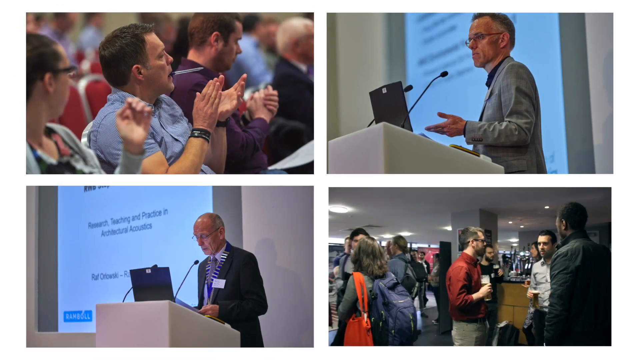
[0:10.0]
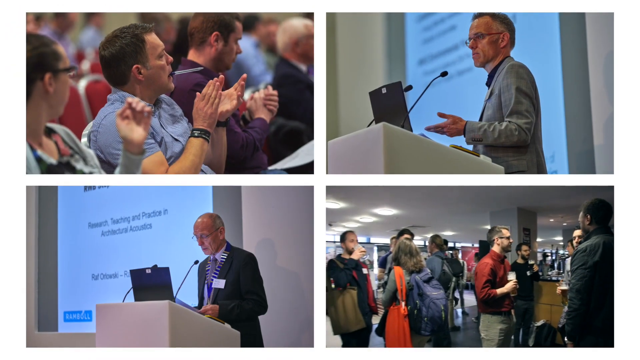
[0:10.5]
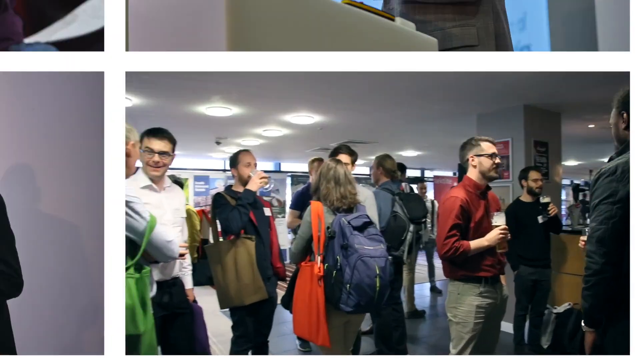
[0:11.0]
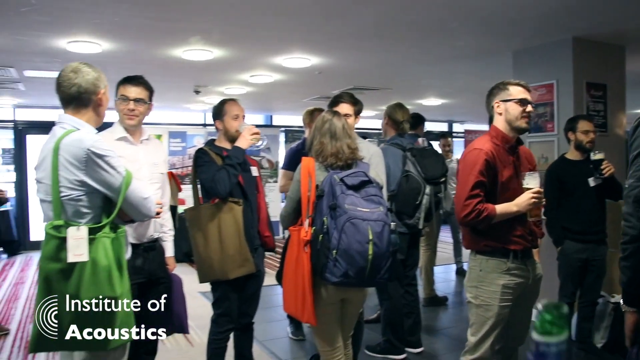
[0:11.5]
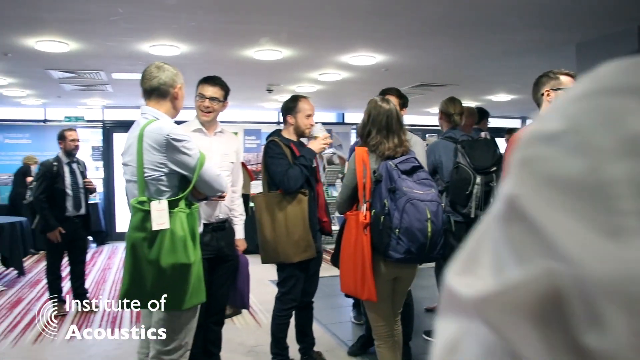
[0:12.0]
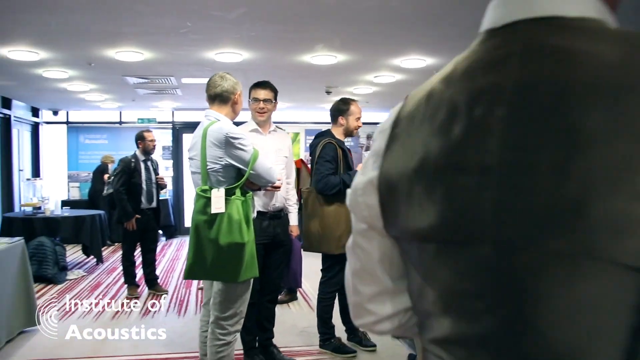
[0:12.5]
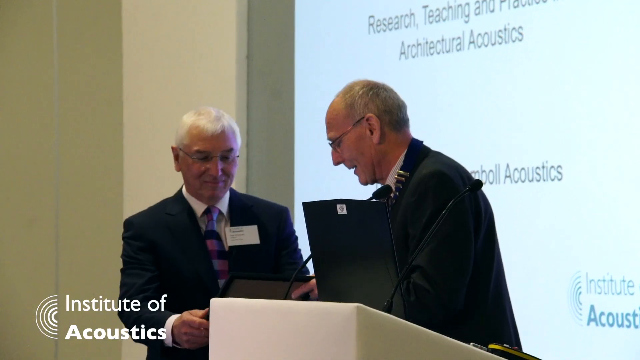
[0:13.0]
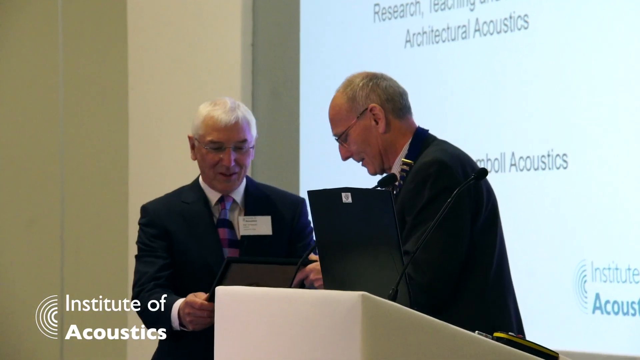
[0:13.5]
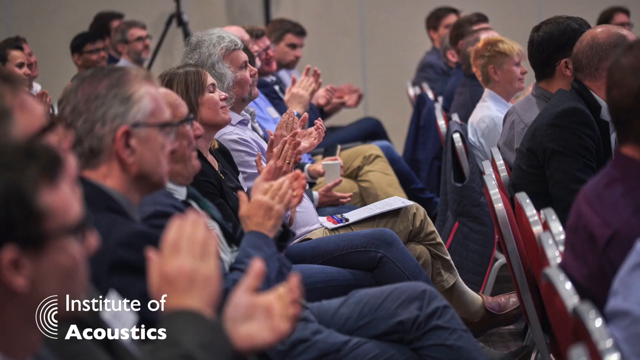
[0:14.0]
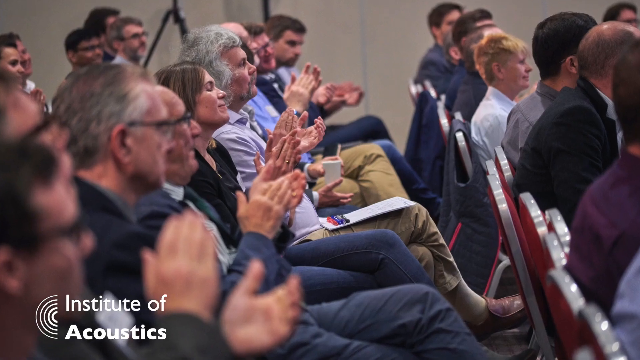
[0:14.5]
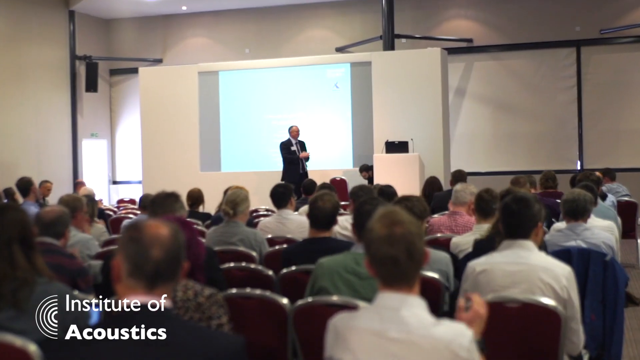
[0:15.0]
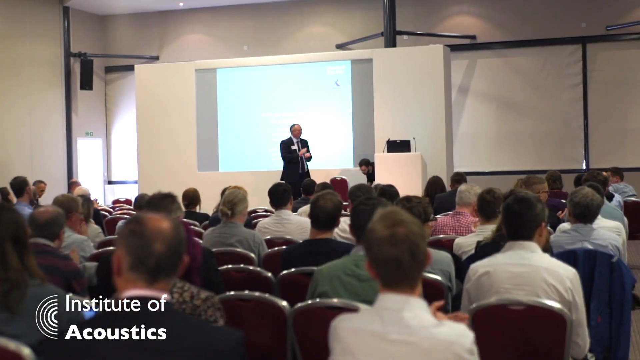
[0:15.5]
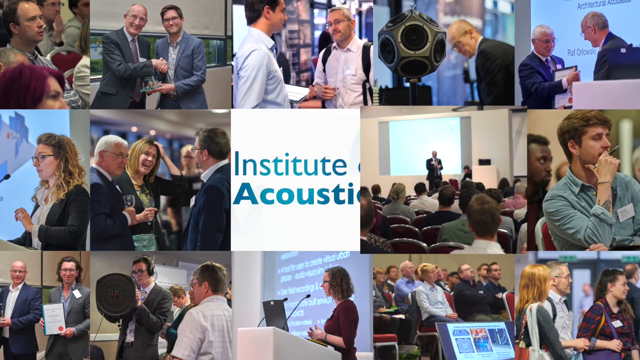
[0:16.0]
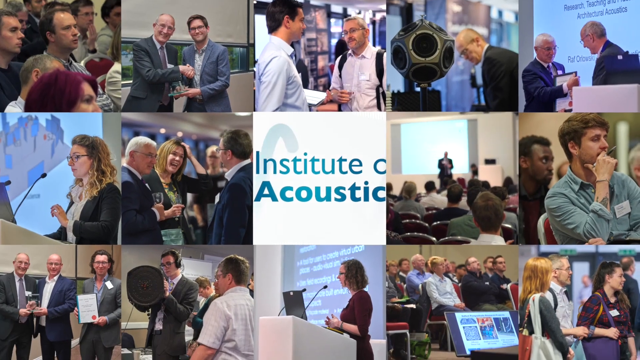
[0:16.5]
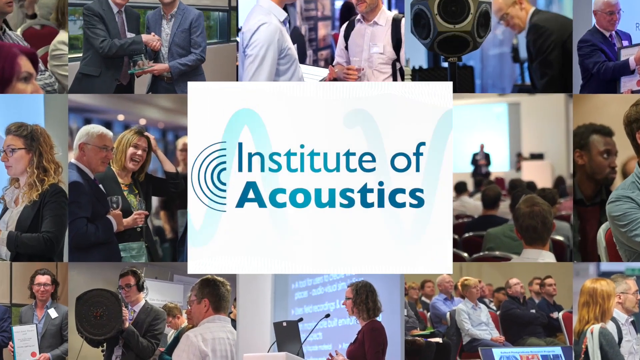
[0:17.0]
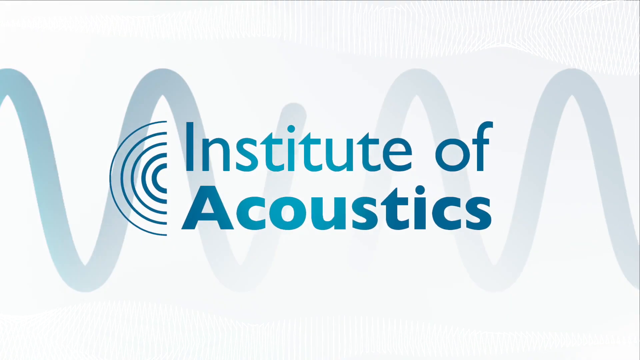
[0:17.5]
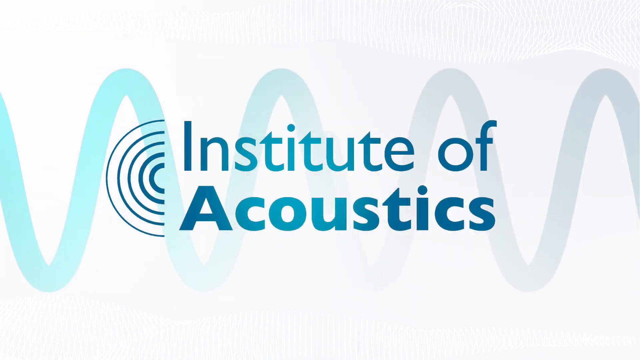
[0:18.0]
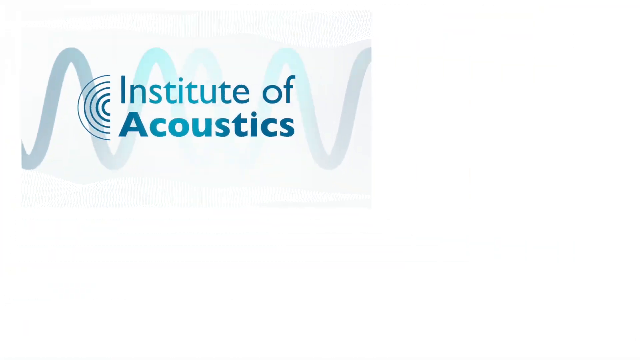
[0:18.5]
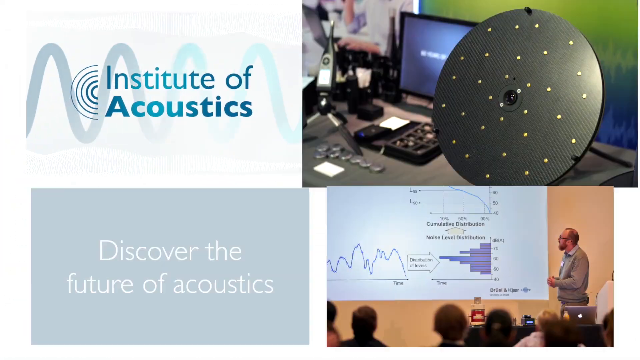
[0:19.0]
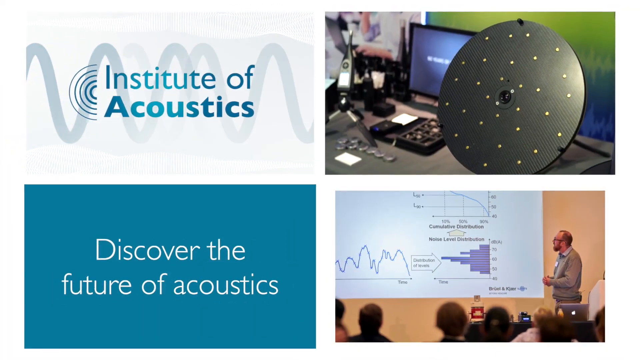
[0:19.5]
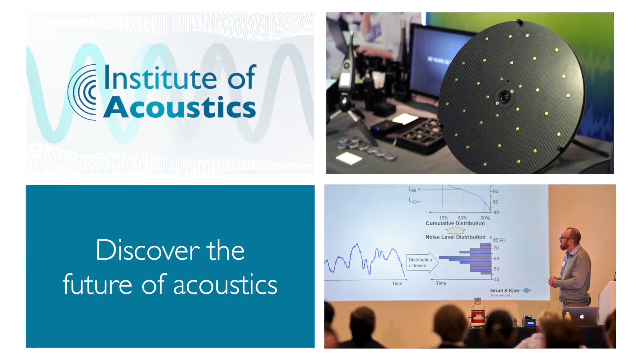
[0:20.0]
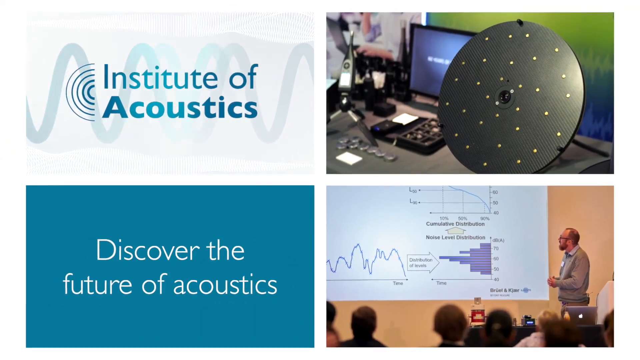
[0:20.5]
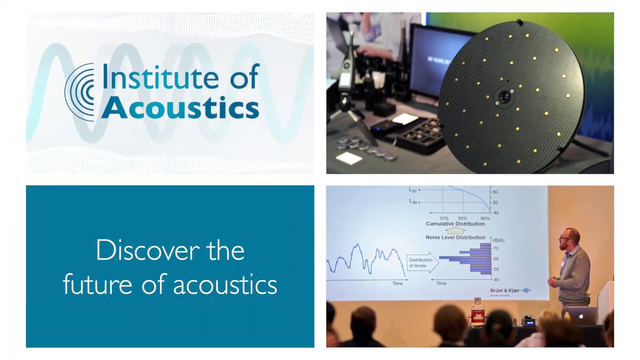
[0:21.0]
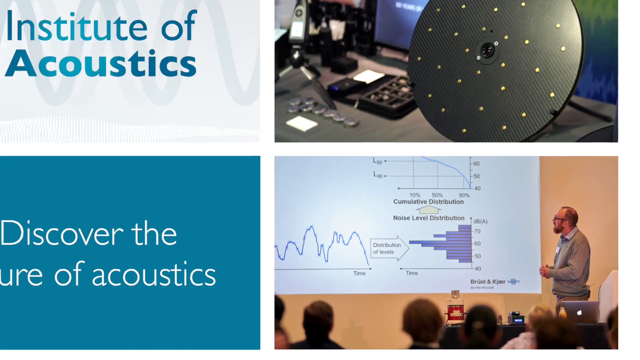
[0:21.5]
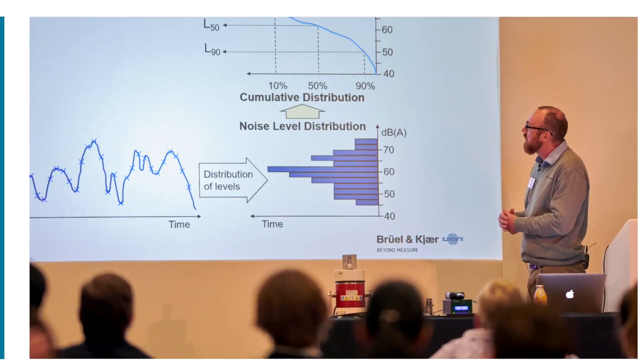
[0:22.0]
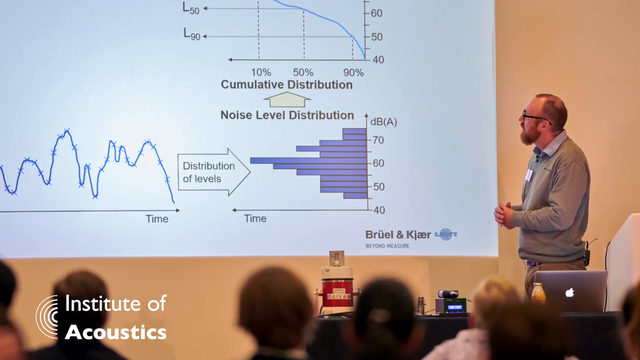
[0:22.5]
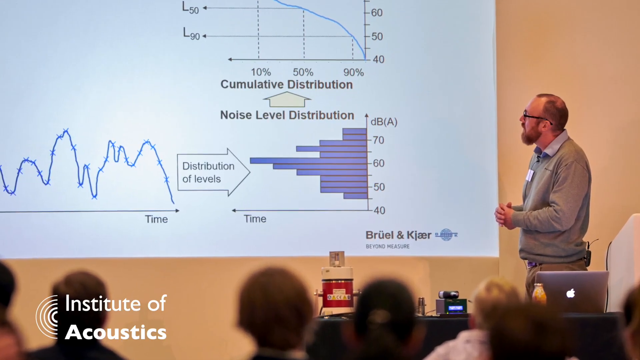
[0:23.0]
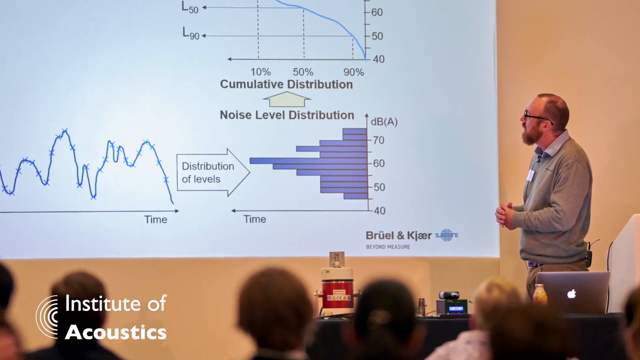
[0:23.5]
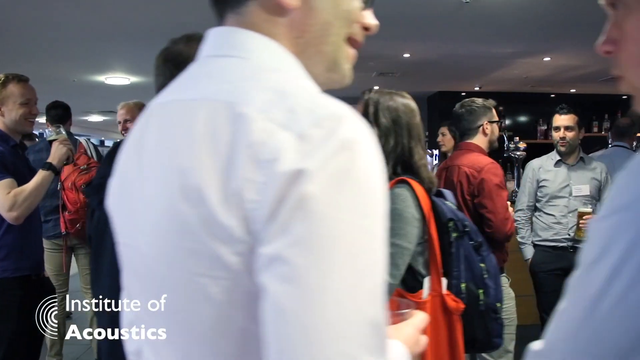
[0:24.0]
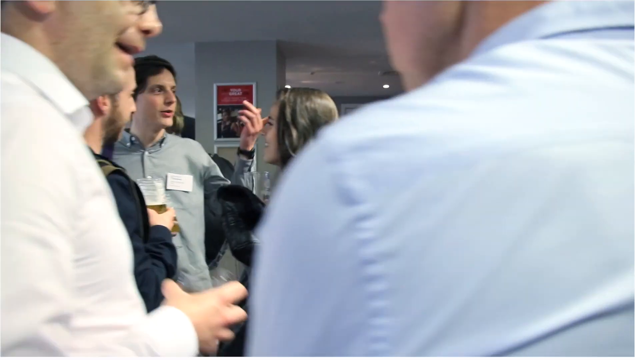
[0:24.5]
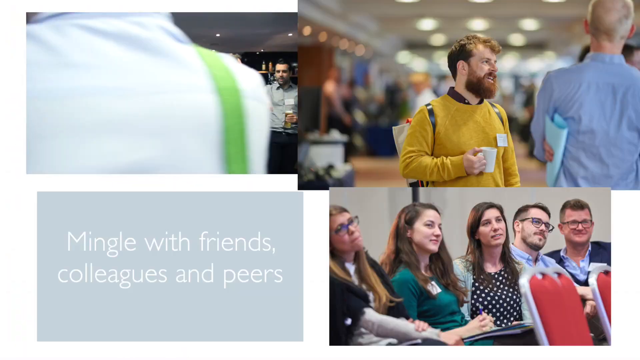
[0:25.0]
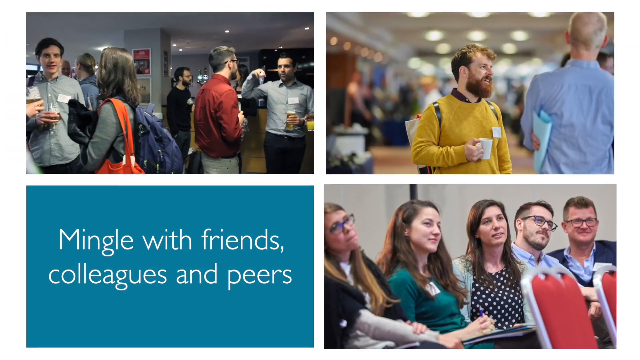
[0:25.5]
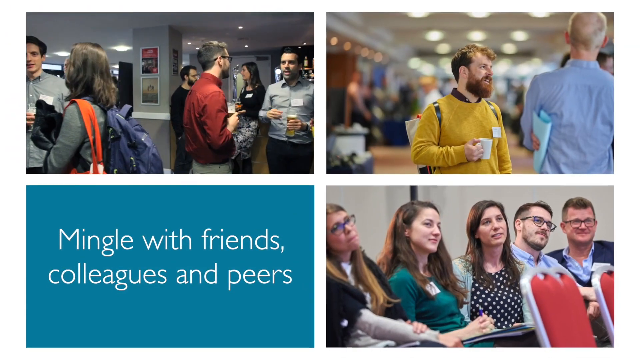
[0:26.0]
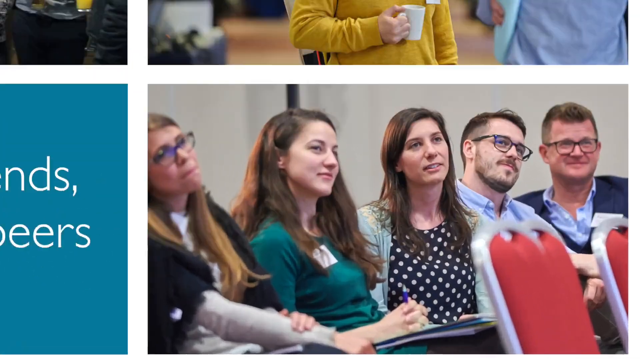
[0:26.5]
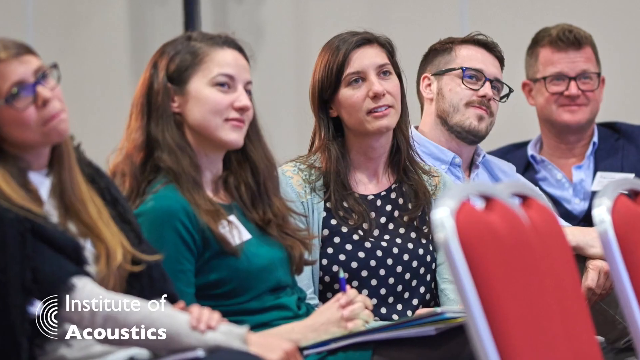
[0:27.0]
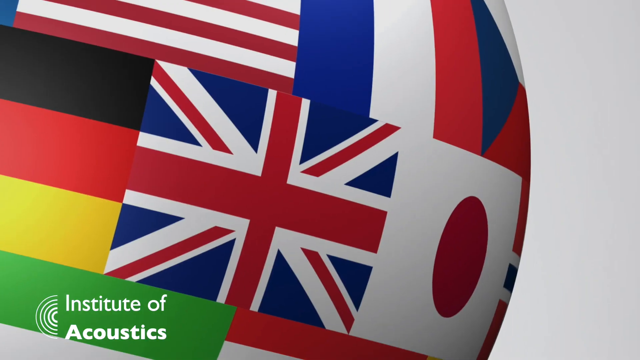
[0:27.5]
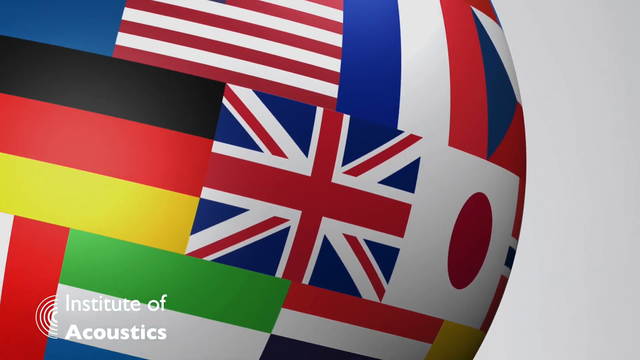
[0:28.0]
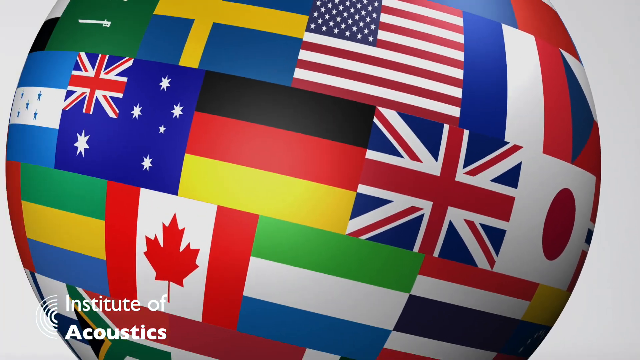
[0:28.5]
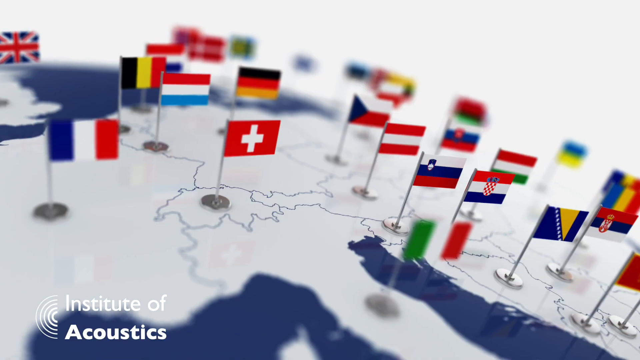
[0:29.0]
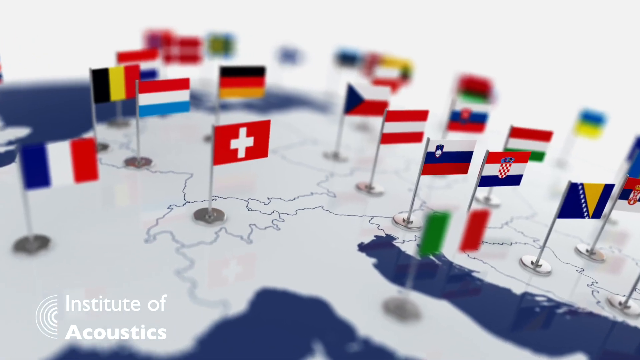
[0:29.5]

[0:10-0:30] Many people are in a building at what seems to be a conference or some type of presentation, and text reads "Institute of Acoustics." Many of the people wear name tags and badges; they are clapping and sitting in chairs. "Institute of Acoustics" appears in blue on a white background. The screen then splits into four, showing Institute of Acoustics, a laptop, and some type of circular, satellite-looking object. Text reads "discover the future of acoustics." A man on a stage presents a graph, some type of chart, and the view zooms in to the picture of him looking at the graph, which mentions cumulative distribution, noise level distribution and distribution of levels. The screen returns to four panels, with people talking, and text reads "mingle with friends, colleagues, and peers." A big circular globe covered with many different country flags appears.